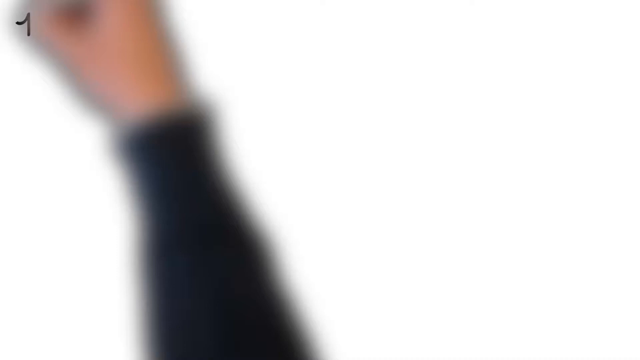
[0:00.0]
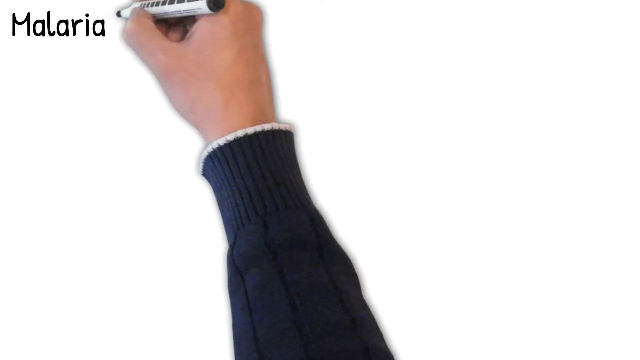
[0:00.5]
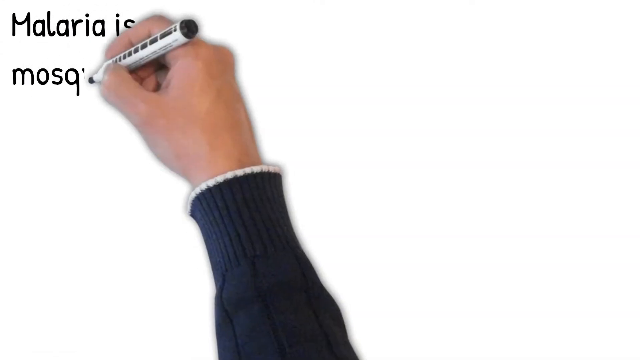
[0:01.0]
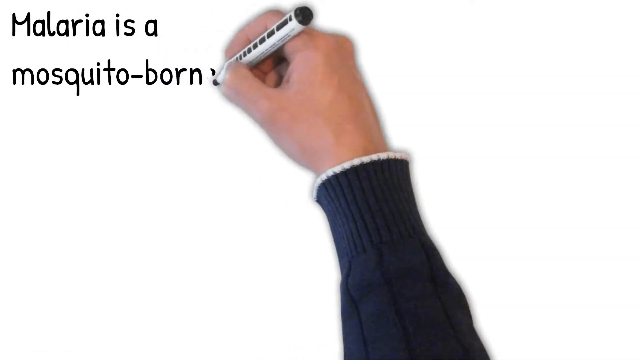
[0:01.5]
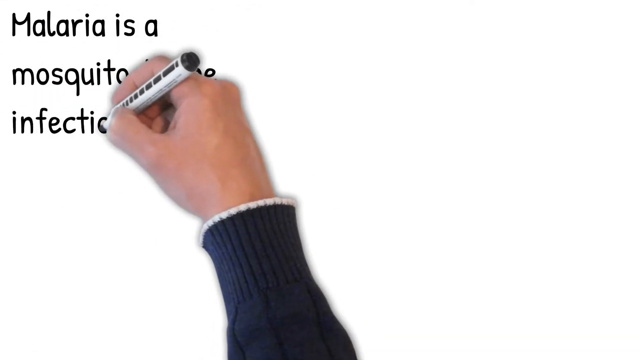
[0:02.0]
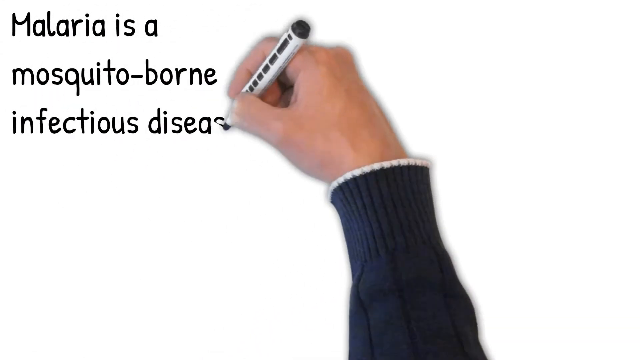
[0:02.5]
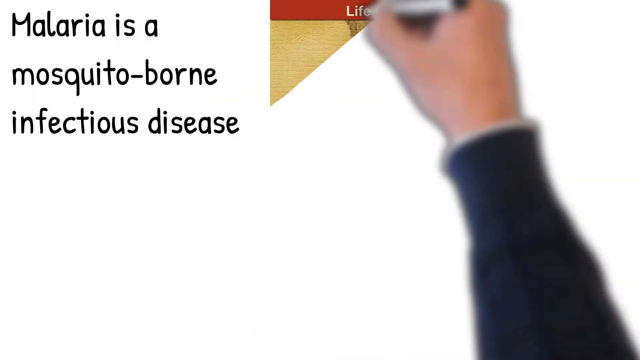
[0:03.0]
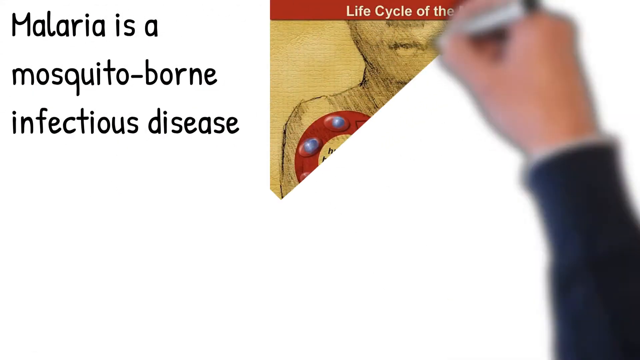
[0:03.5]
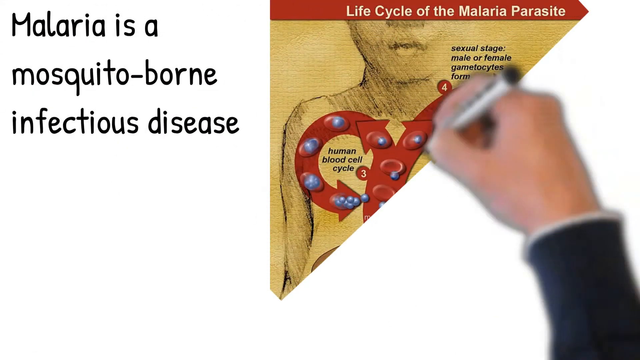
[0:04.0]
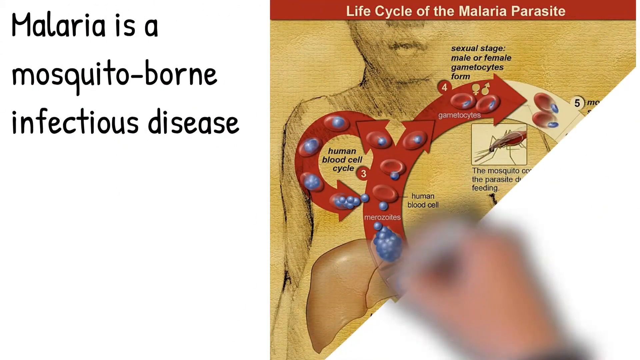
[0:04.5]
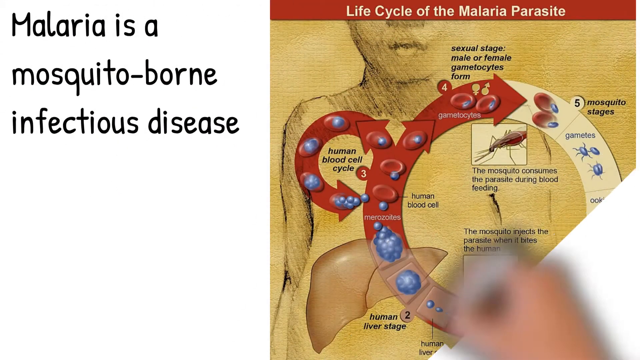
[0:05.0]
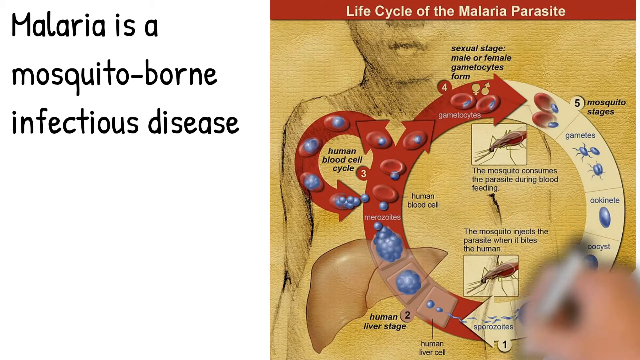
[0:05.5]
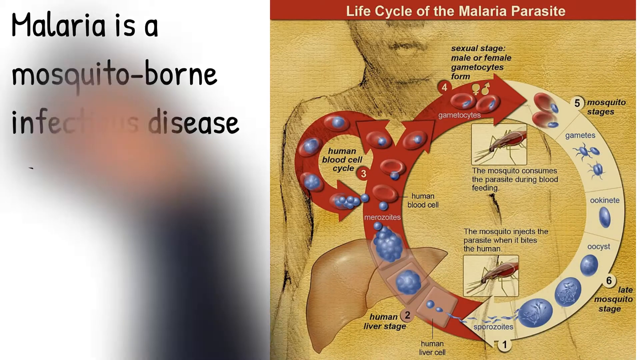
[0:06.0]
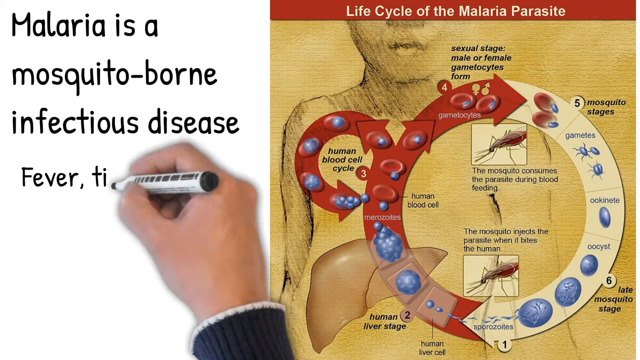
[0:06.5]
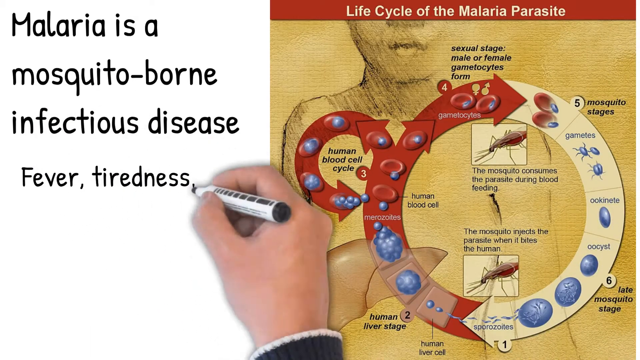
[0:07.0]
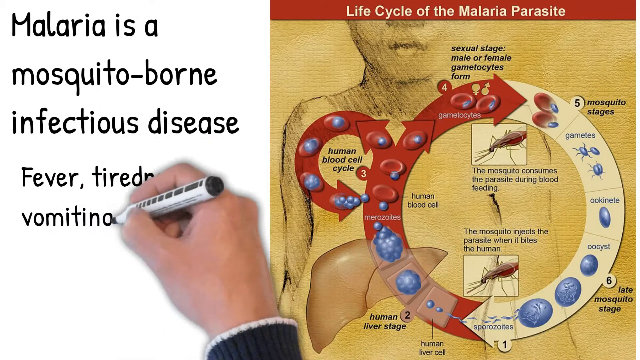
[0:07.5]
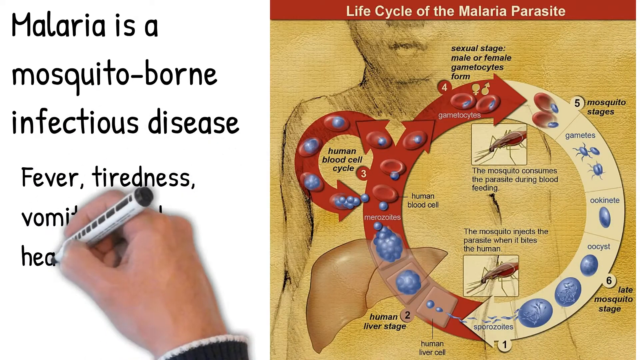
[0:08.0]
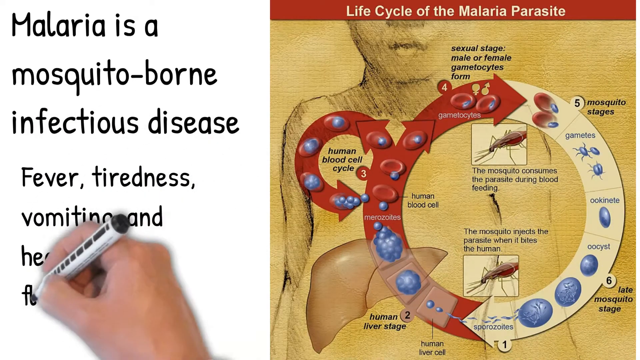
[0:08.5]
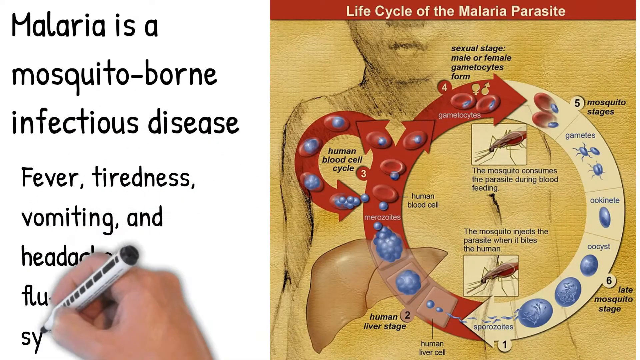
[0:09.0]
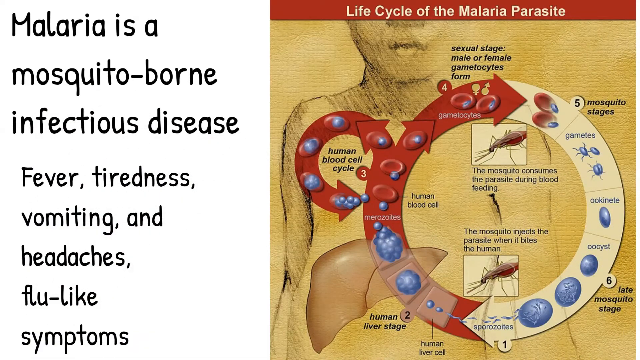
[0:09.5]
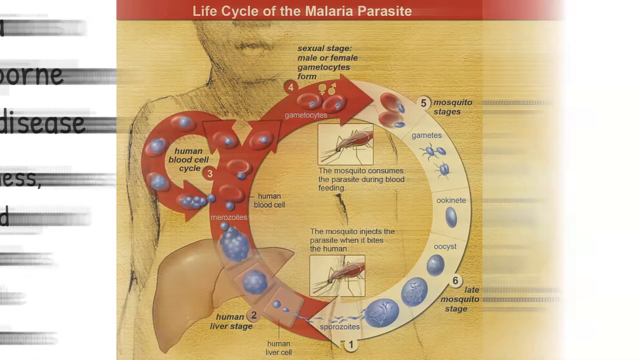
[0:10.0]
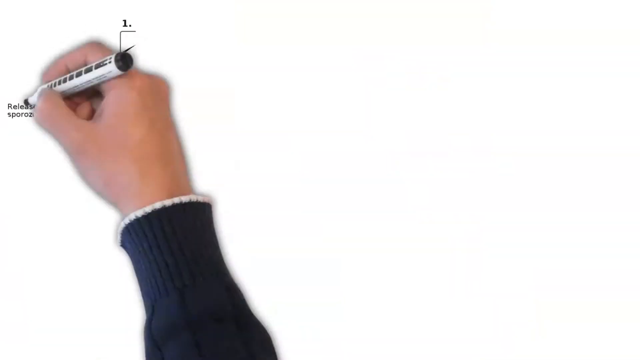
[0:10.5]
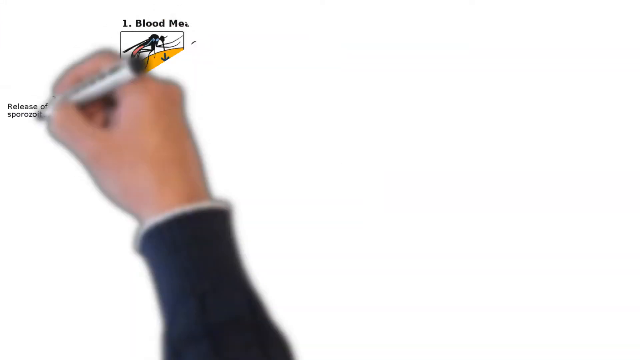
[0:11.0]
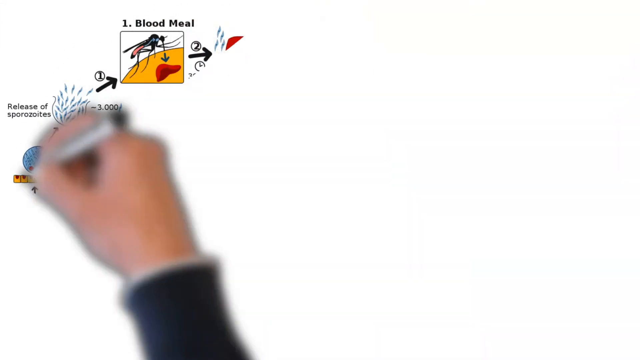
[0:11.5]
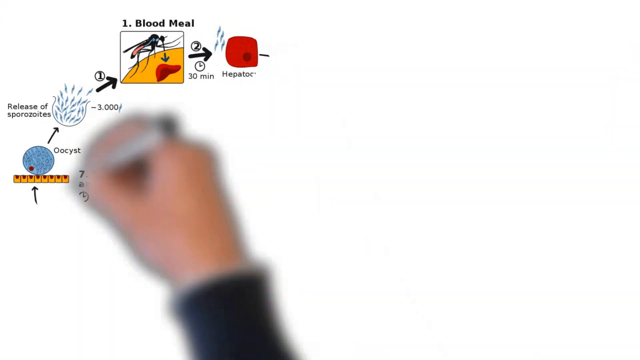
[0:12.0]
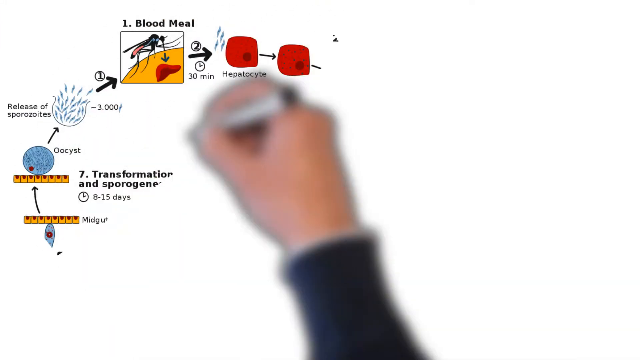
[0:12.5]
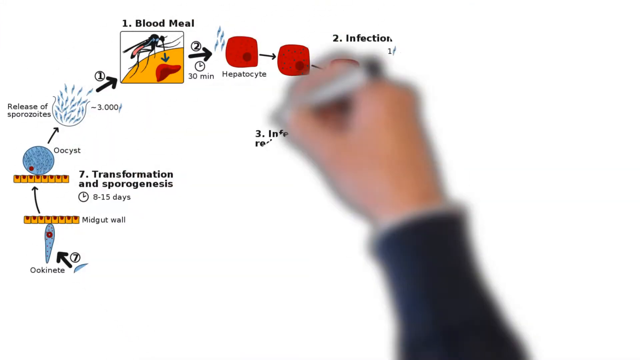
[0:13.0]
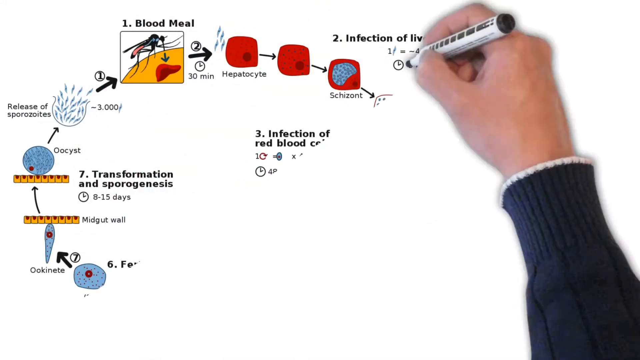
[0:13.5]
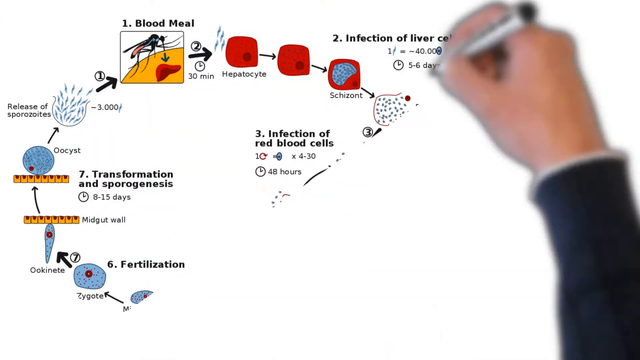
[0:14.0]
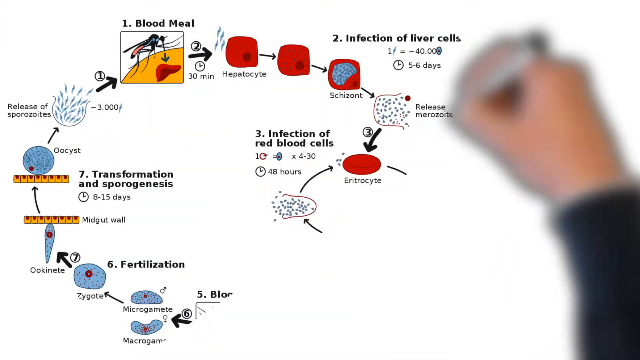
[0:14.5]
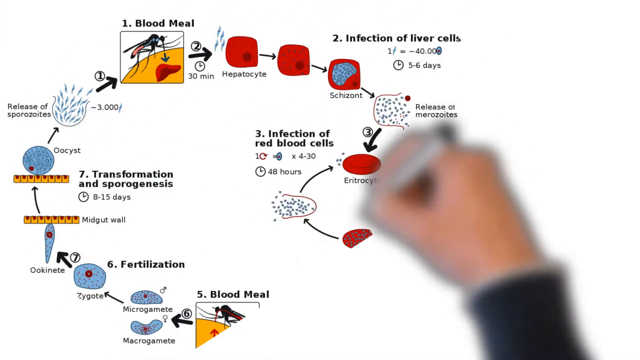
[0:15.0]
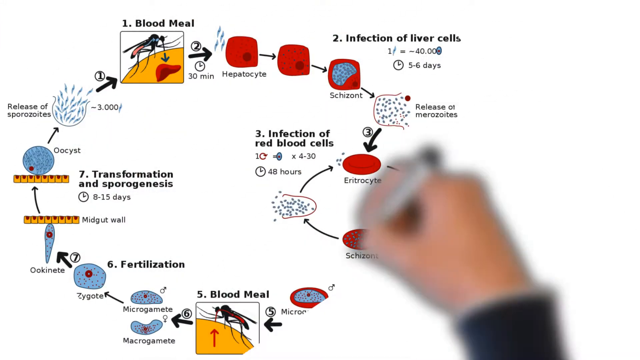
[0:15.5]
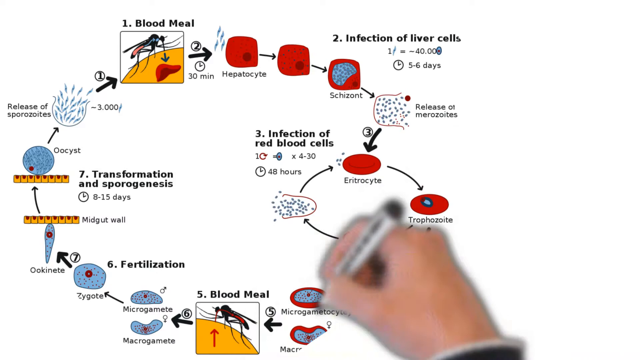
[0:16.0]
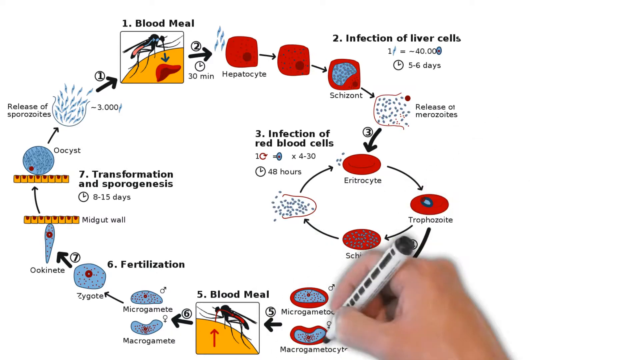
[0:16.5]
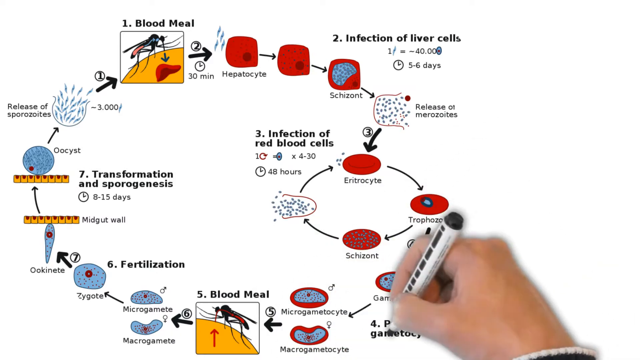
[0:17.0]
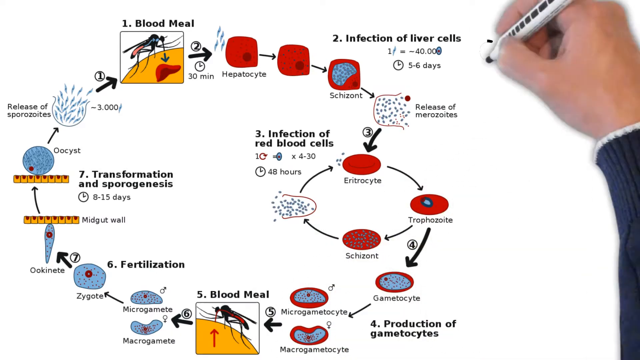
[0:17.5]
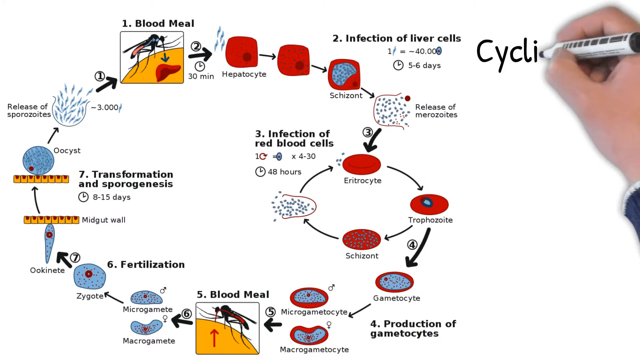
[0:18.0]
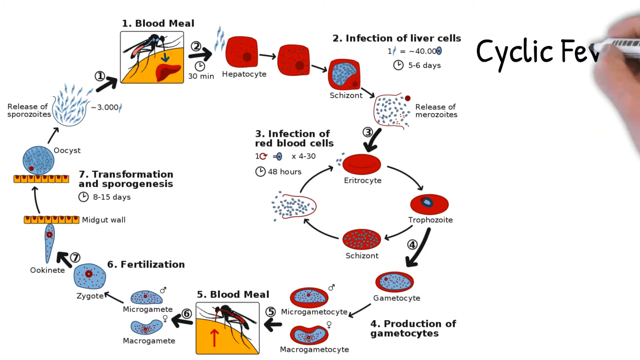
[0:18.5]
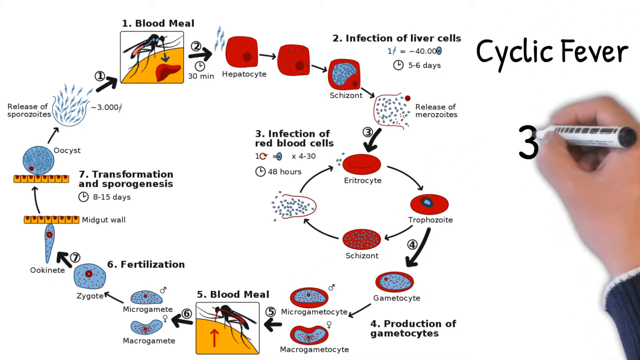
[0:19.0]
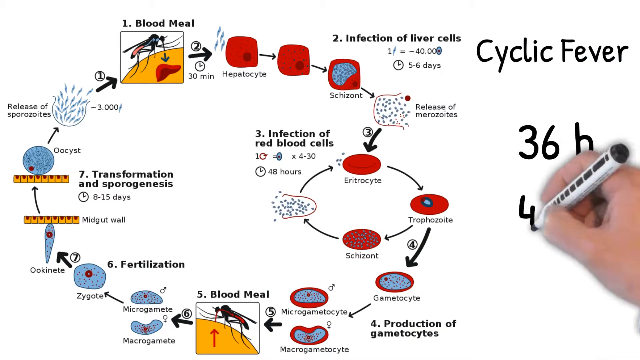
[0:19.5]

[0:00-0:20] The video is made in the style of a whiteboard: a hand holding a pen scribbles across the page as if writing. It is an animation, and the hand is not actually writing. On the left side of the screen, text reads "malaria is a mosquito born infectious disease". On the right side there is an image headed "life cycle of the malaria parasite", with a graphic of a life cycle. Stage one is sporosocytes, where the mosquito injects the parasite when it bites a human; stage two is the human liver stage; stage three is the human blood cell cycle stage; stage four is the sexual stage, where male or female gametocytes form; and stage five is the mosquito stages. The text on the left then continues, reading "fever, tiredness, vomiting, and headaches, flu-like symptoms".